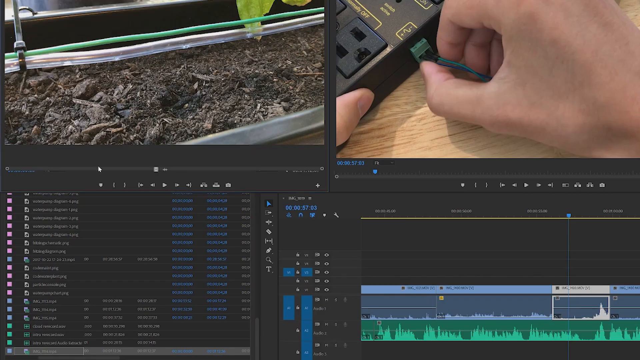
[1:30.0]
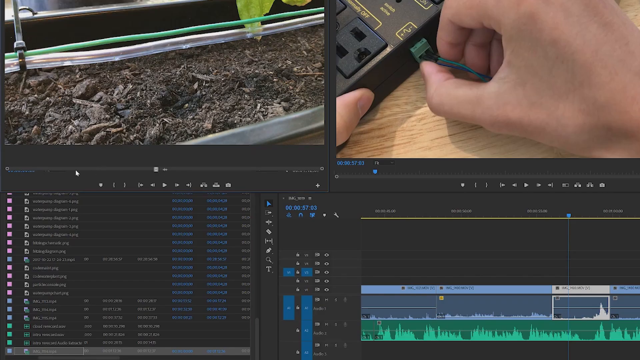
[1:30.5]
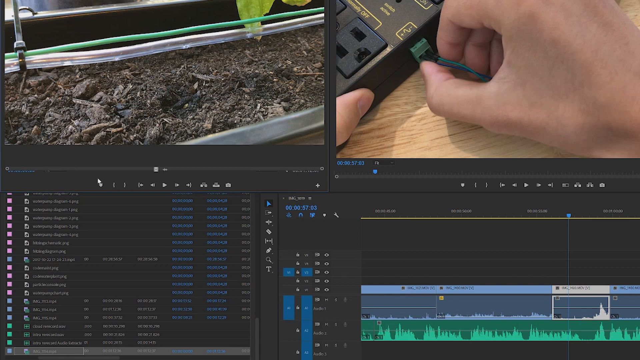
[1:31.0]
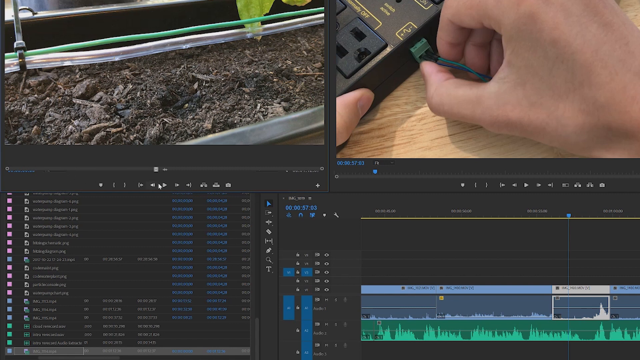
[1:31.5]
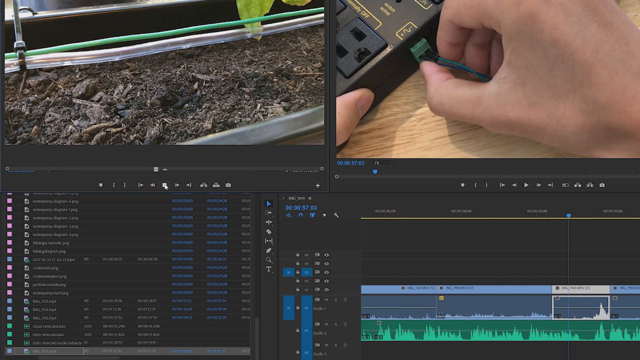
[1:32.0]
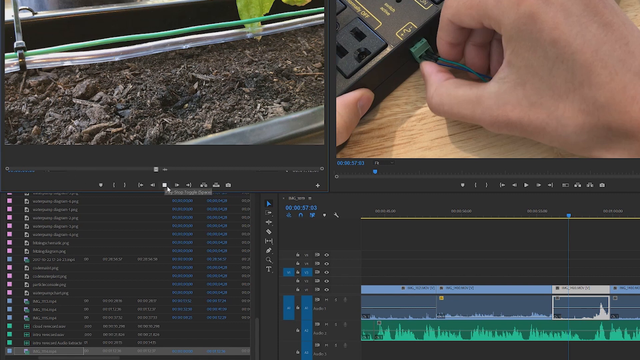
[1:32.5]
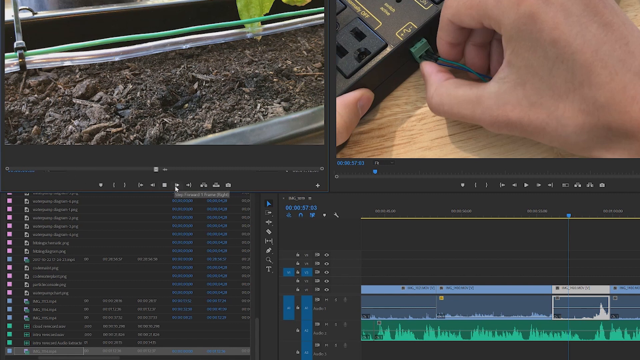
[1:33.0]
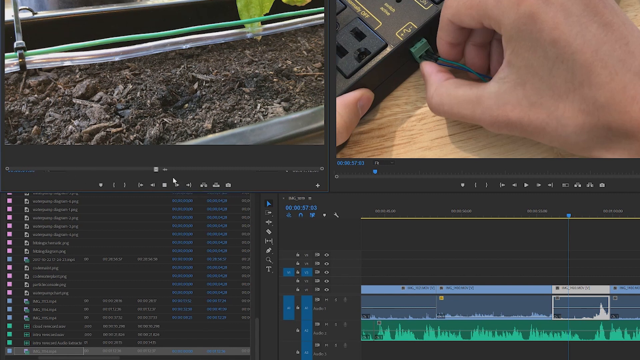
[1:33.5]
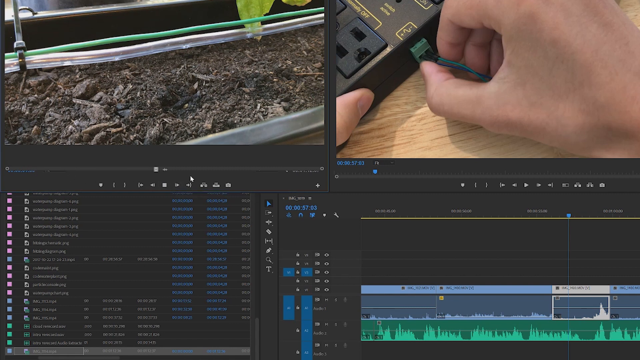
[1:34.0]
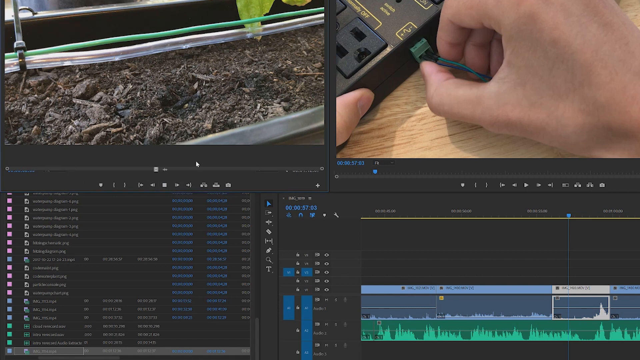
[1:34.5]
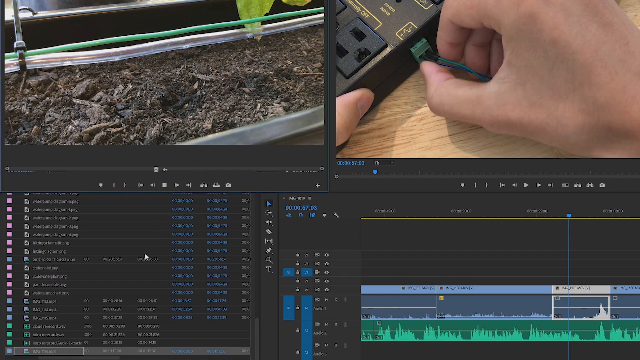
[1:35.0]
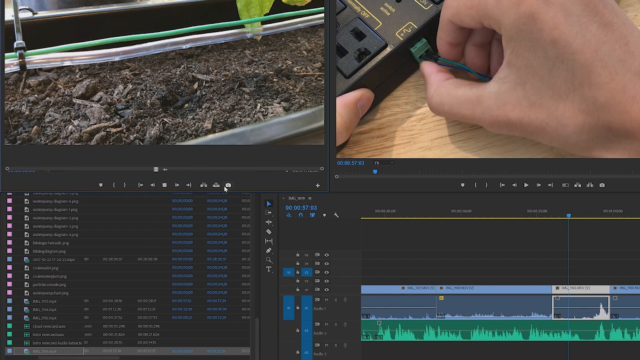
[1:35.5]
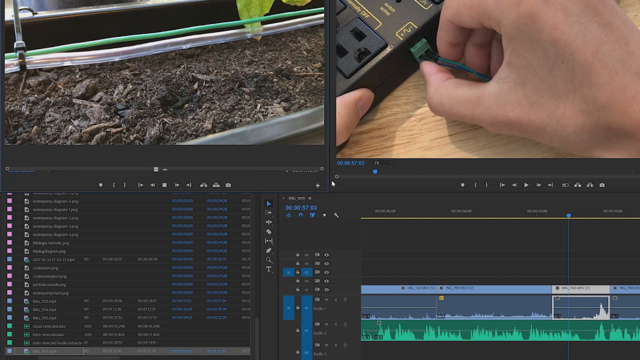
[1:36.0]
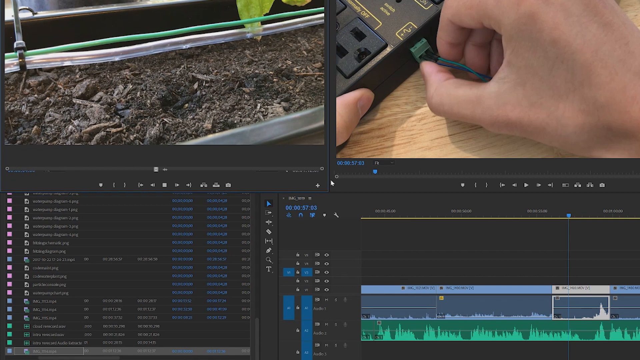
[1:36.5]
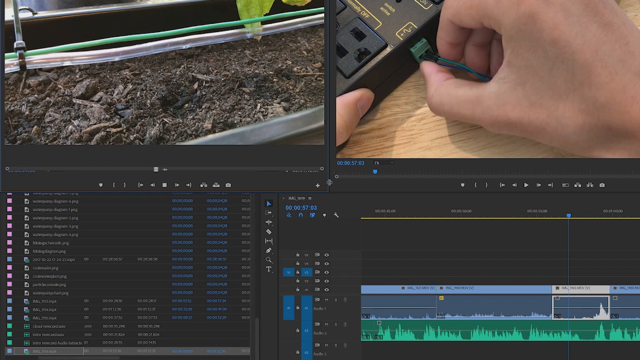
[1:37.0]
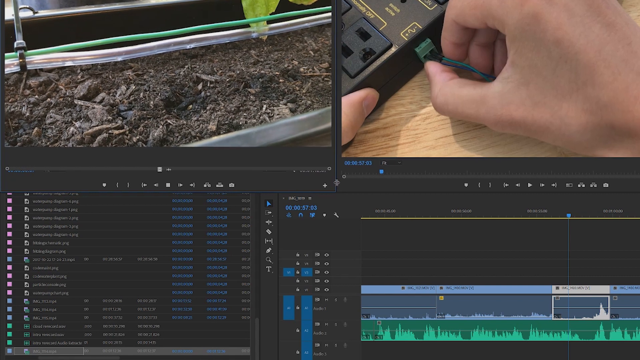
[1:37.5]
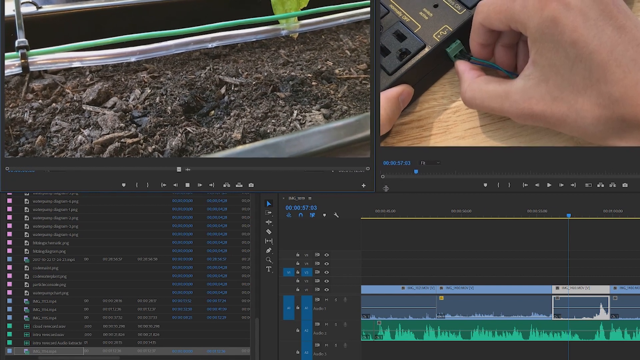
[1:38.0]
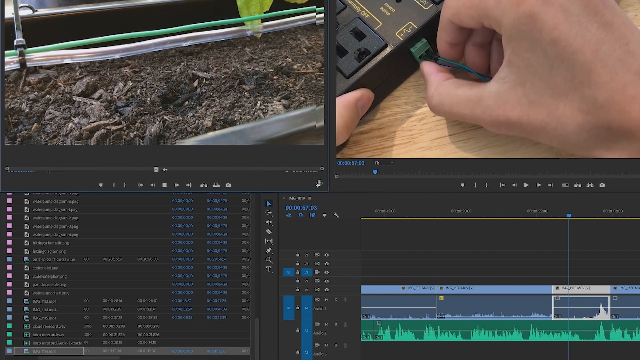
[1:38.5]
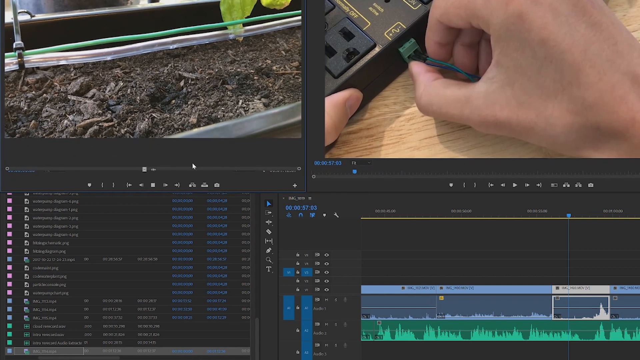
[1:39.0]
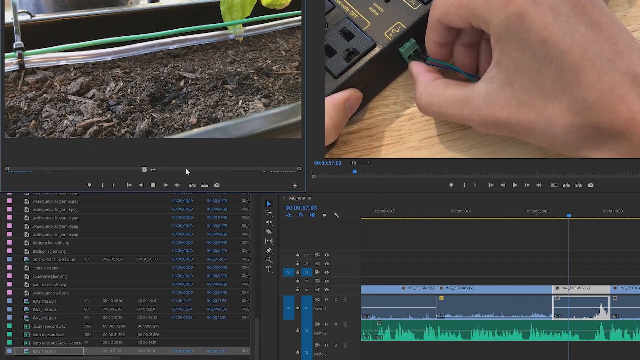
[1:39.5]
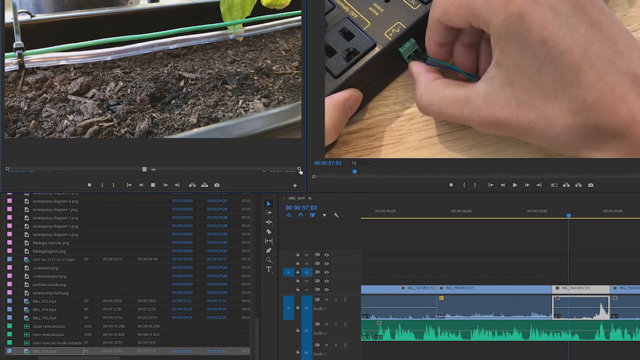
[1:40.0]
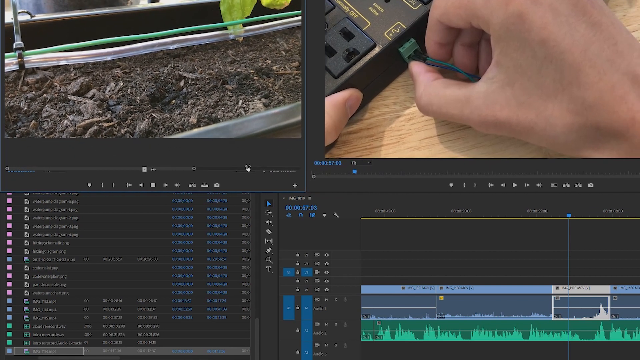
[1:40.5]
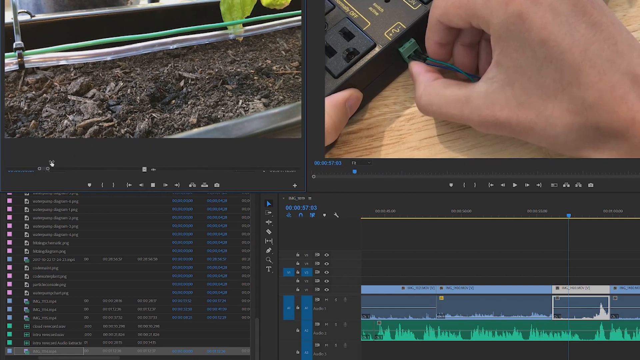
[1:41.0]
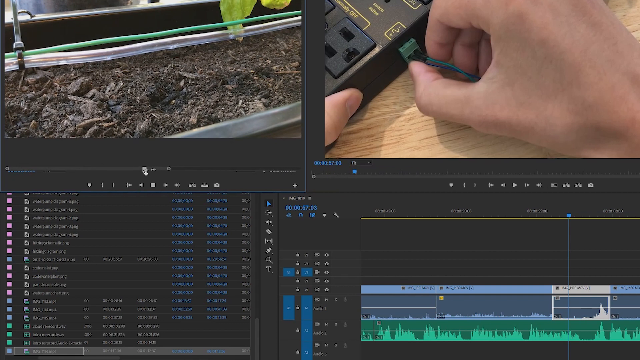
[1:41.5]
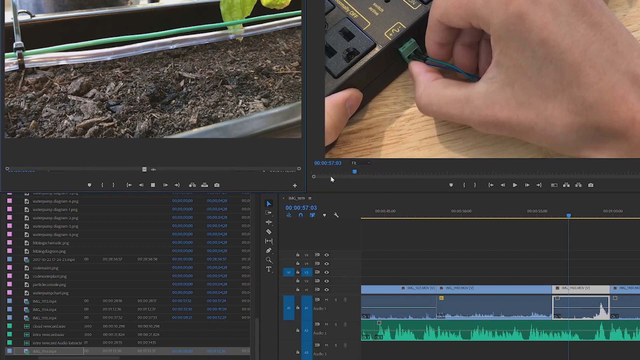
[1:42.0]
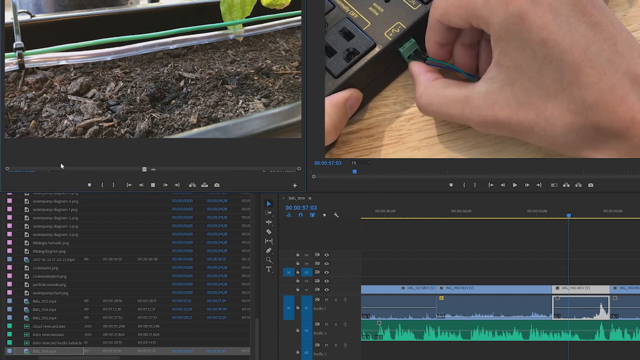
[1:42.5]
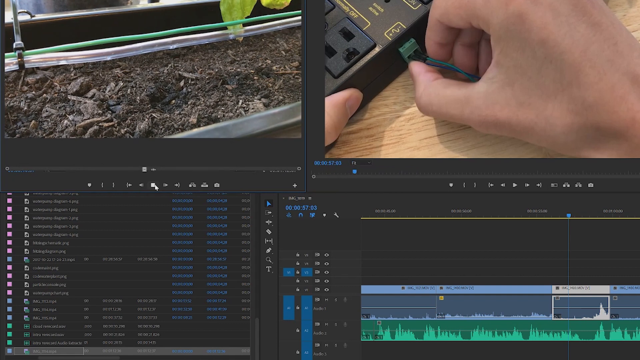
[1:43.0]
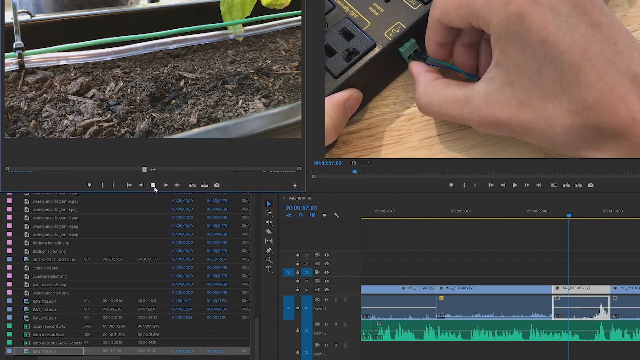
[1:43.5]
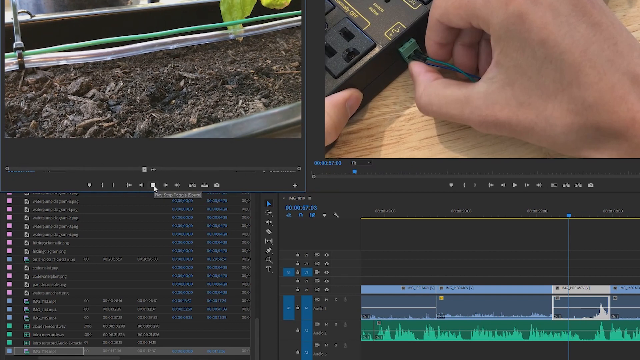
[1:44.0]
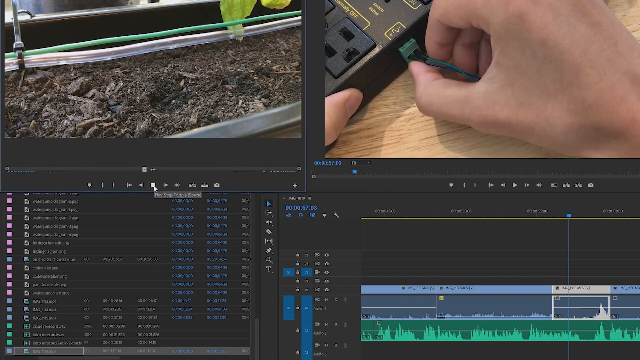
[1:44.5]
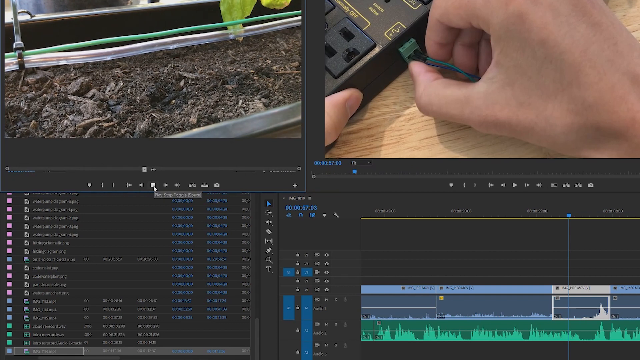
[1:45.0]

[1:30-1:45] The area that was green at the start is no longer green. A green cable and a white cable are held together by a black cable, with the green cable above the white cable, and only the tip of the greenish-yellowish leaf now shows. The white person's hand is still holding the cable, fixing it to the engine; the extended cable is also green, and the man's other thumb is directly on the engine. The green side is showing, and the cursor moves quickly to copy, moves on the green side, and tries to click on "ok" but does not click.